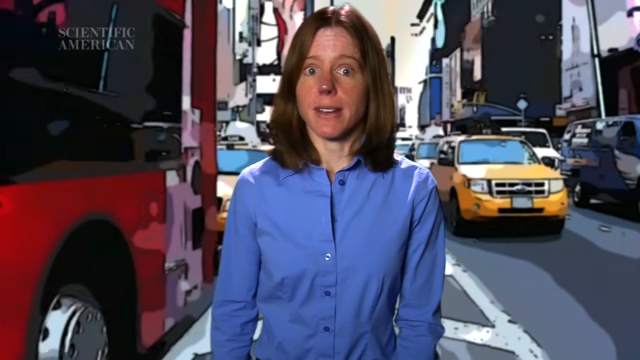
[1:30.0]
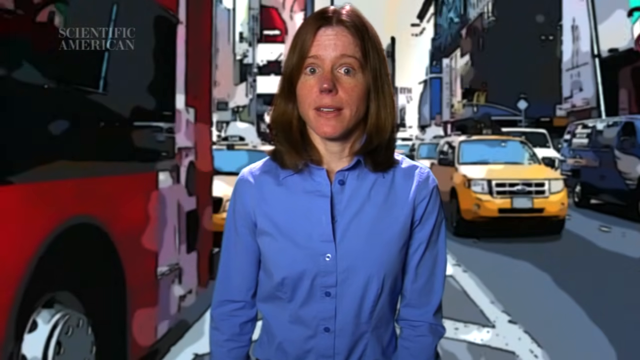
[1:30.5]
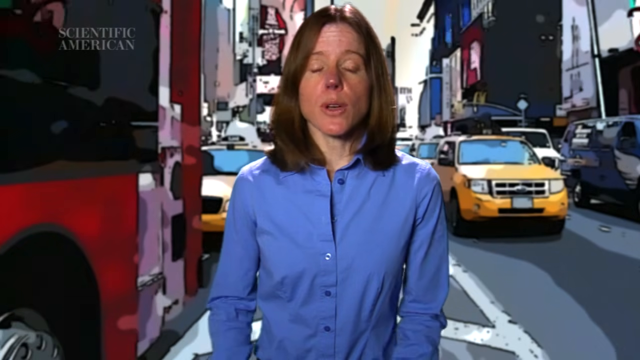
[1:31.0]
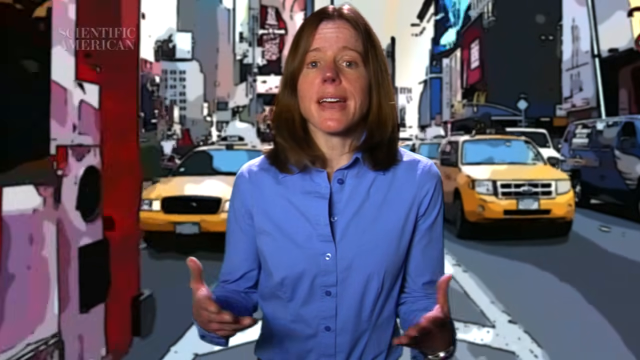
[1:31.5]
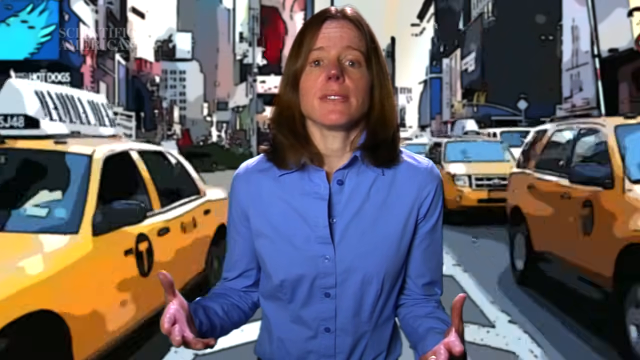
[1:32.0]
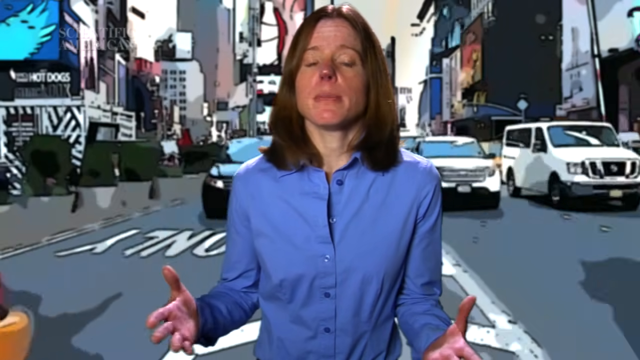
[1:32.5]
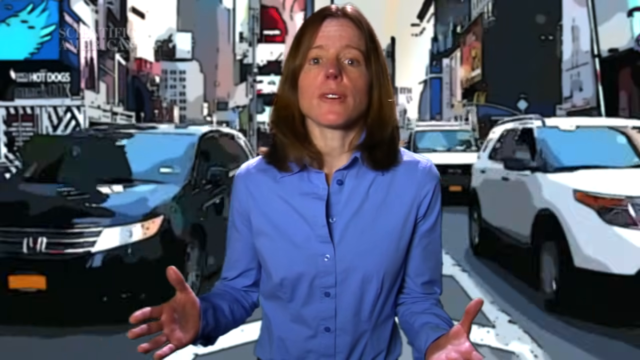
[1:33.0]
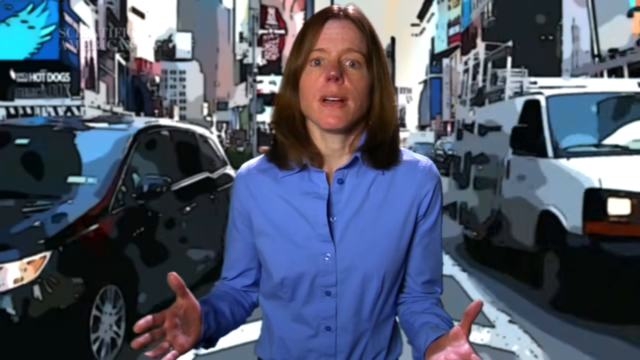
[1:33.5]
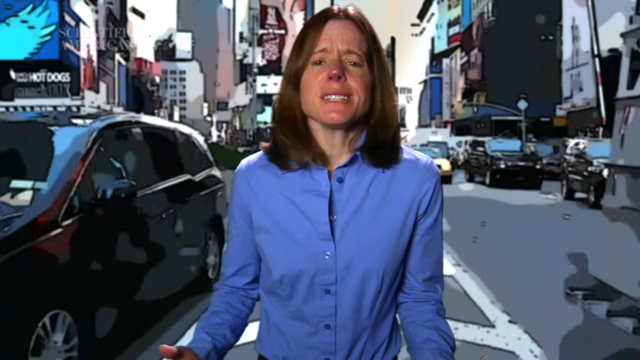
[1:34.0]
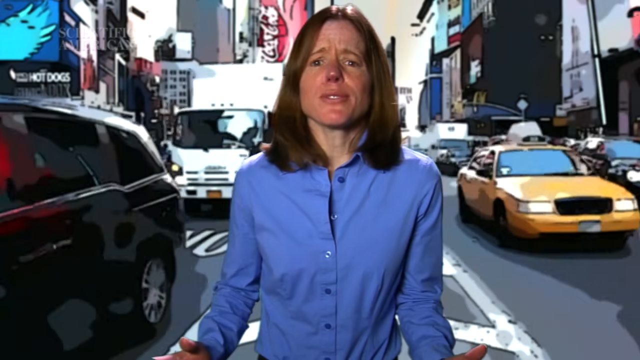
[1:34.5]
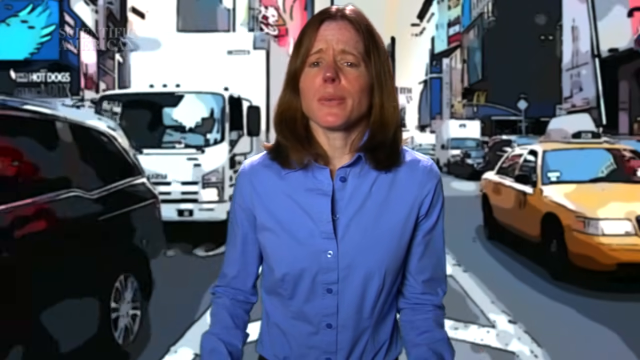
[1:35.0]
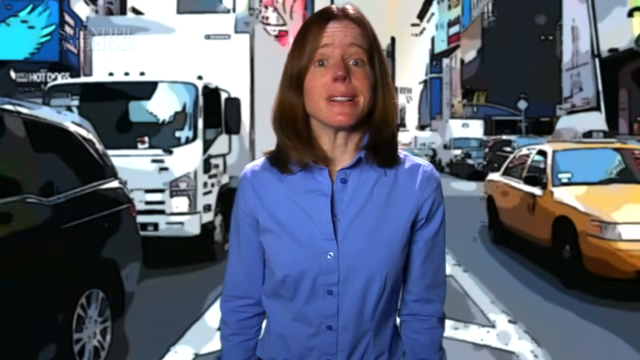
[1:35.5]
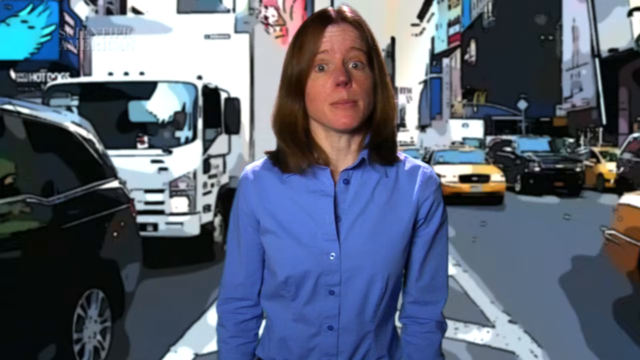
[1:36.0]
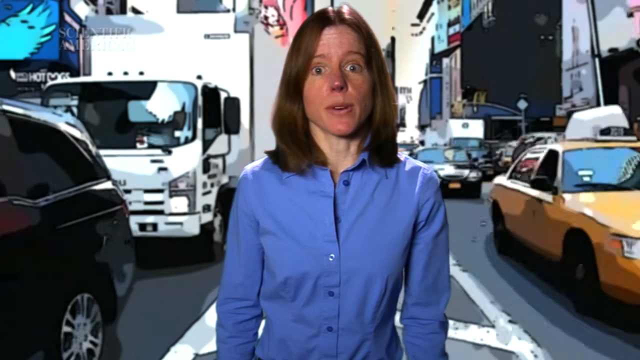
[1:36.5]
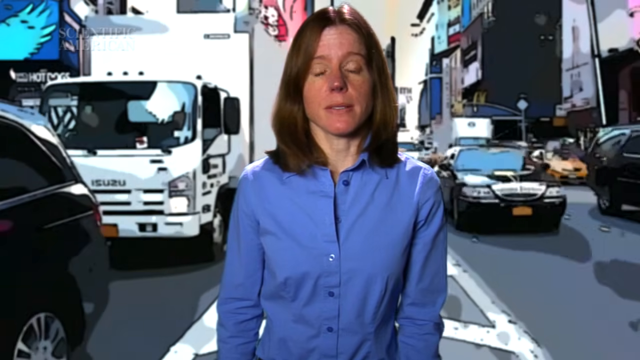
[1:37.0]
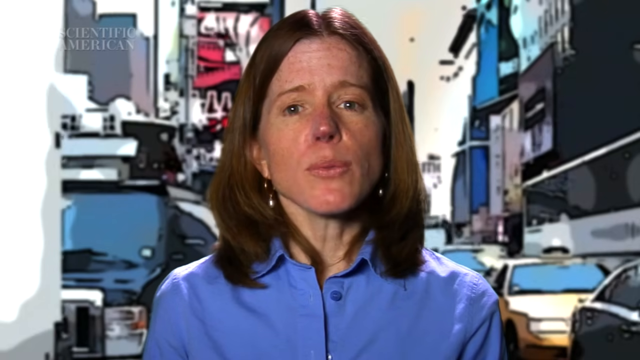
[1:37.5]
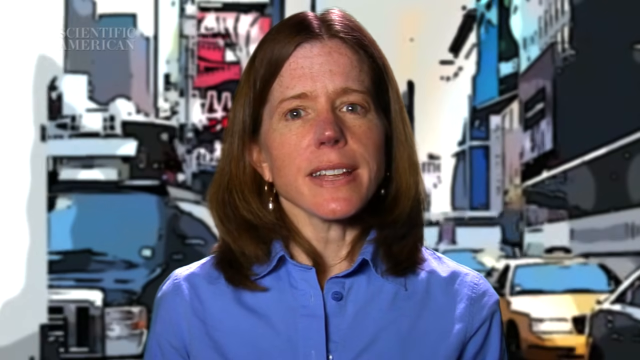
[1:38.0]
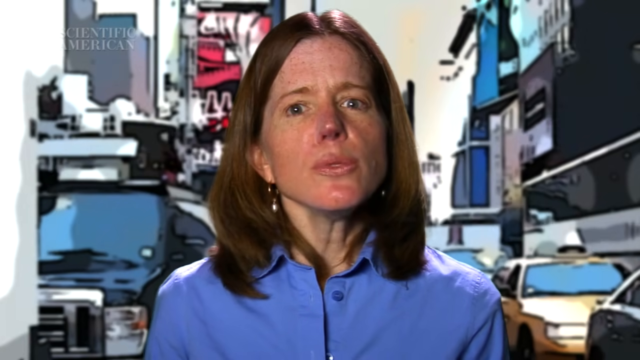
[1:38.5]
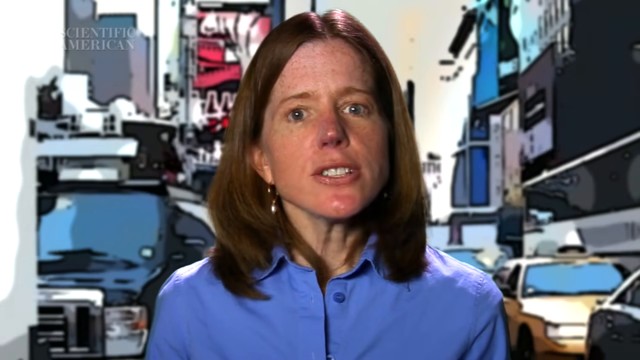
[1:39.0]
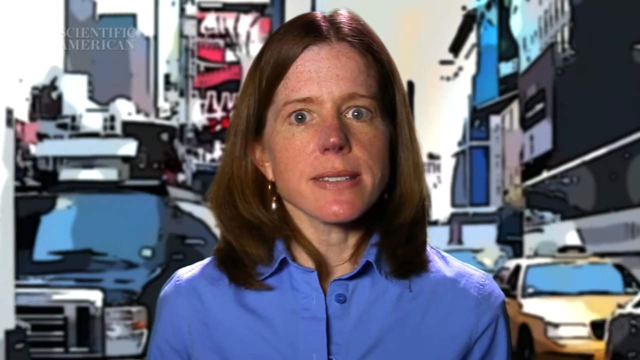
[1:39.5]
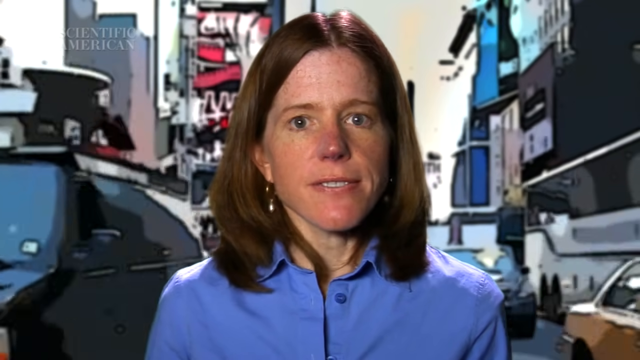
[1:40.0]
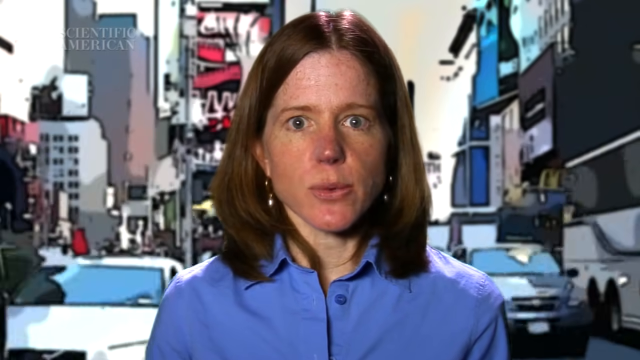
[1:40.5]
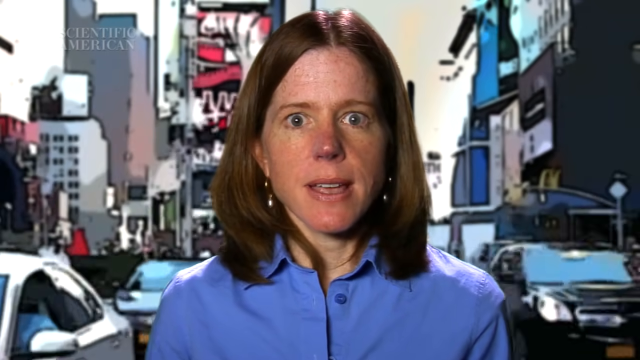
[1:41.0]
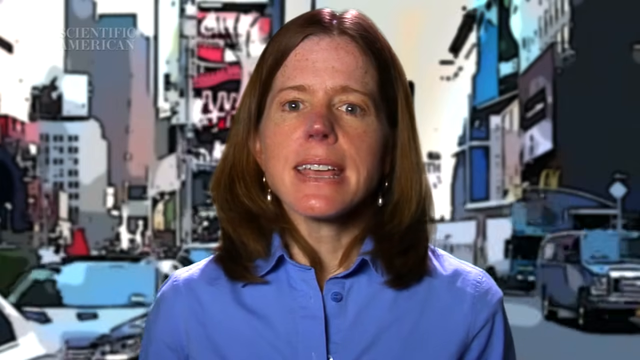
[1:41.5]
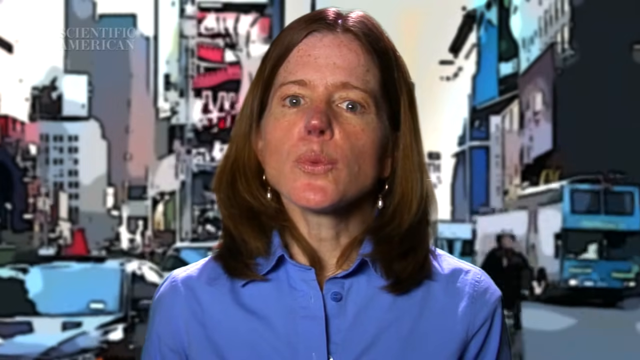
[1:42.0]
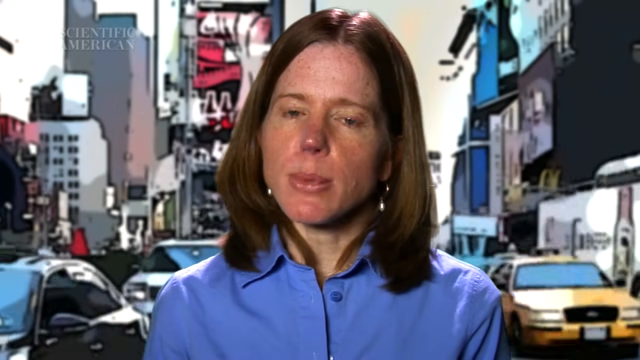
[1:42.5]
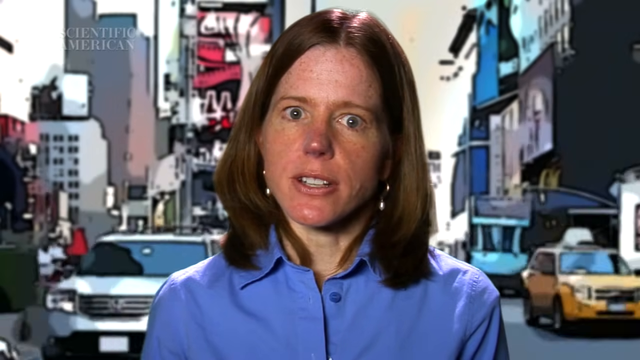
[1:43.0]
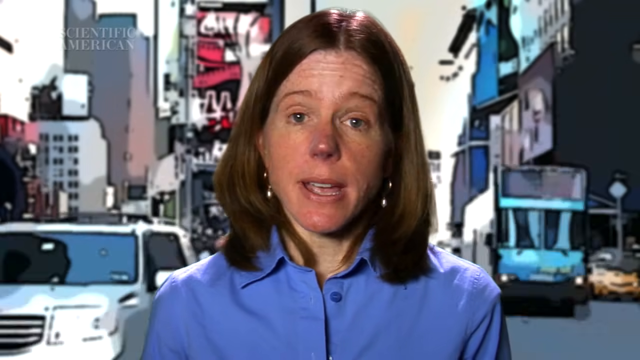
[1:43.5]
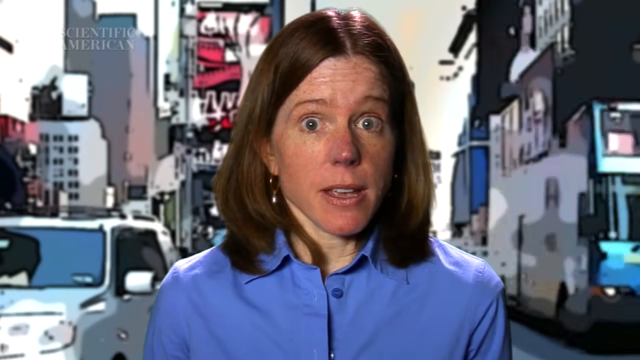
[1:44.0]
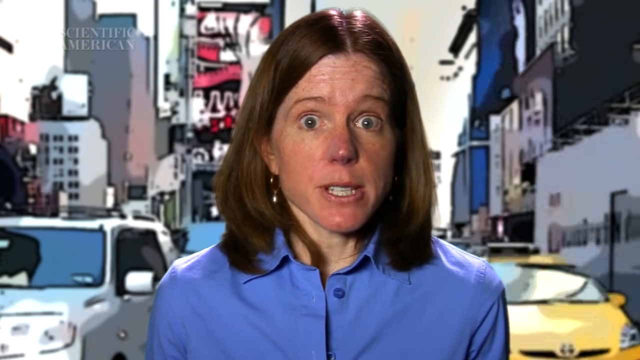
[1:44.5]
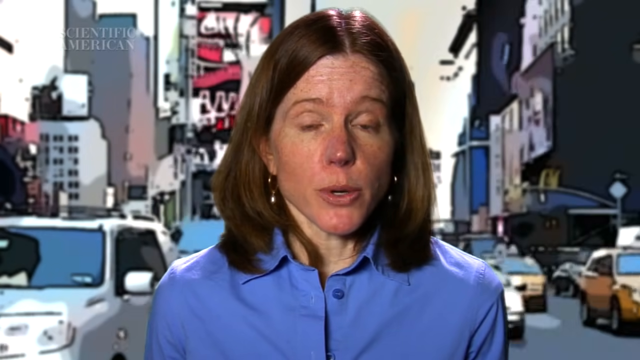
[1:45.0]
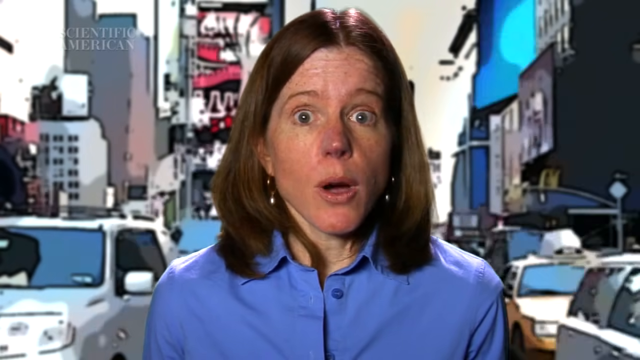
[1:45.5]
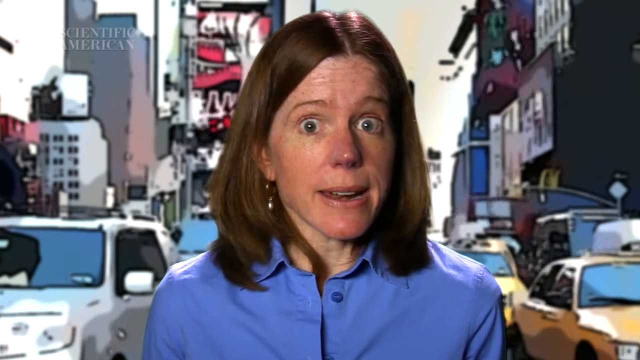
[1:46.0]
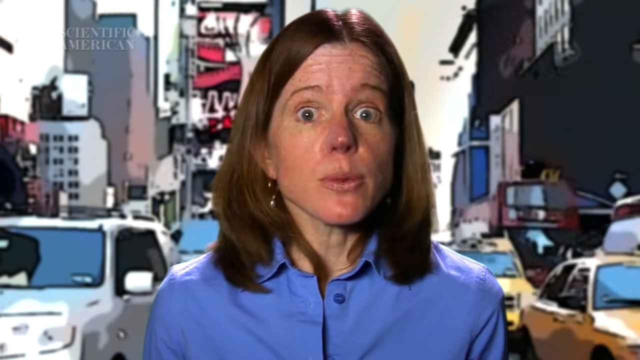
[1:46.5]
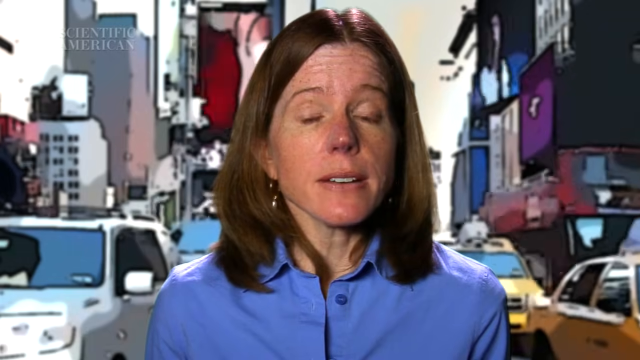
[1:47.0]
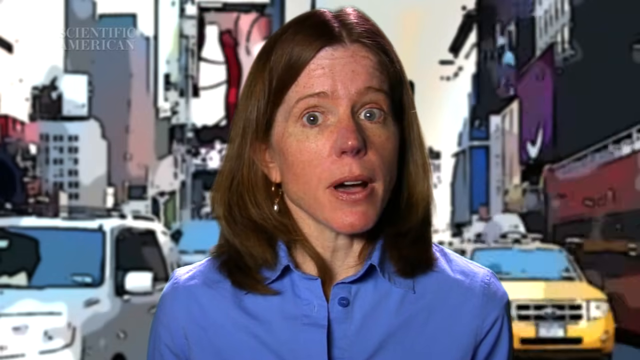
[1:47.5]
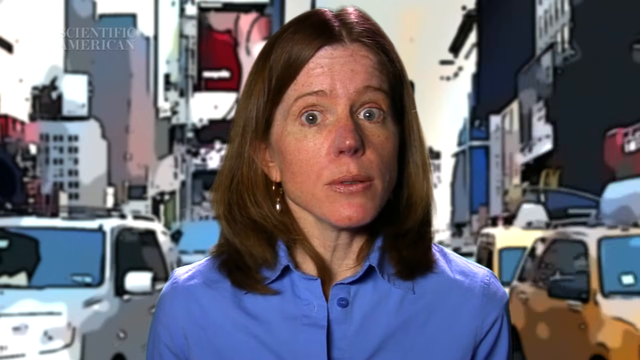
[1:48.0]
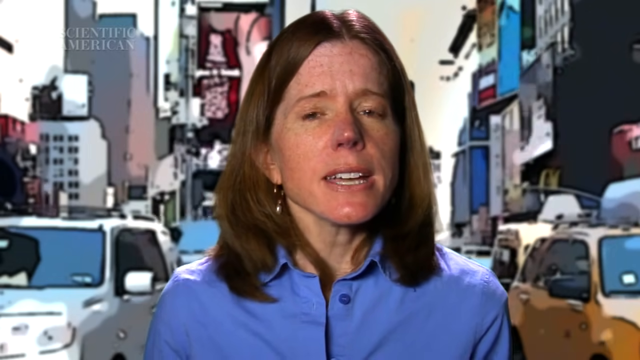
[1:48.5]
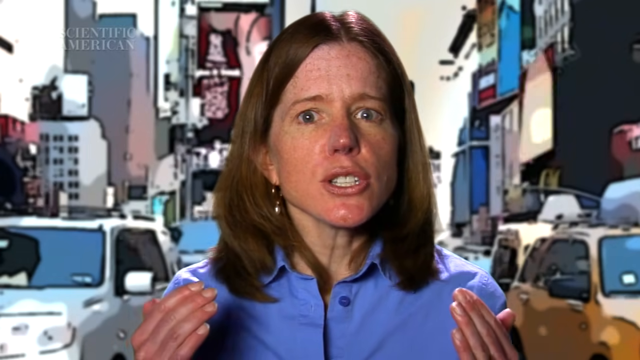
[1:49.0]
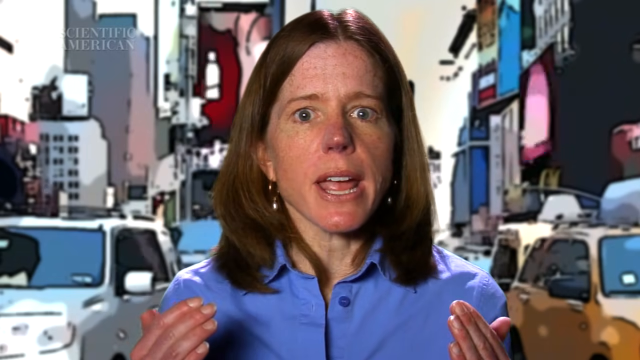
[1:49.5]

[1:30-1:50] In Times Square, New York, "Scientific American" is in the upper left corner. The same woman stands in the median in the middle of the street, with traffic approaching from behind her on both sides. She uses hand gestures, shoulder shrugs and head shakes to make her points, with a lot of animated eye and head movement. In the background is a portion of Times Square with video screens, tall buildings and businesses, and many moving advertisements on video screens on the buildings. Many taxi cabs approach from behind her and pass on both sides, along with trucks, personal vehicles, tour buses and bicyclists riding in the streets. The traffic is heavy, stop and go. It is daytime, and she wears a long-sleeve blue button-front top.